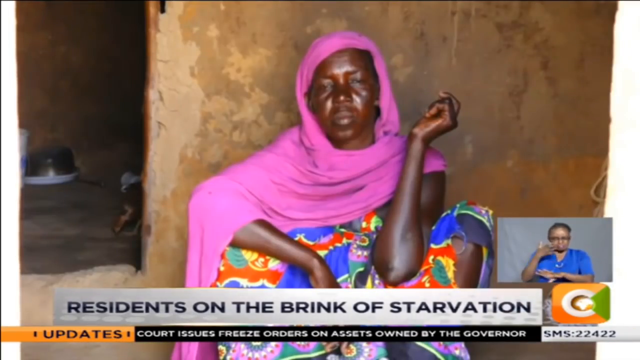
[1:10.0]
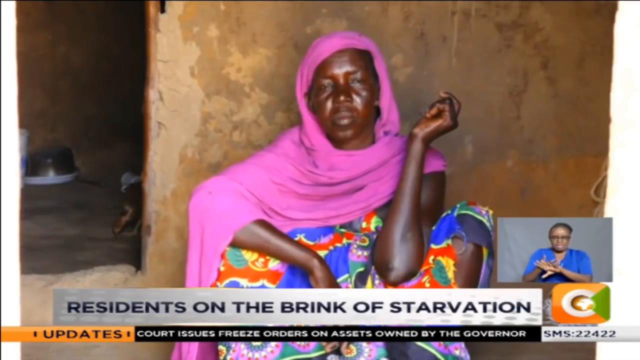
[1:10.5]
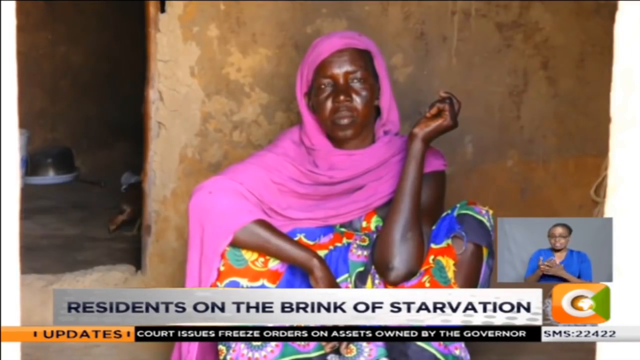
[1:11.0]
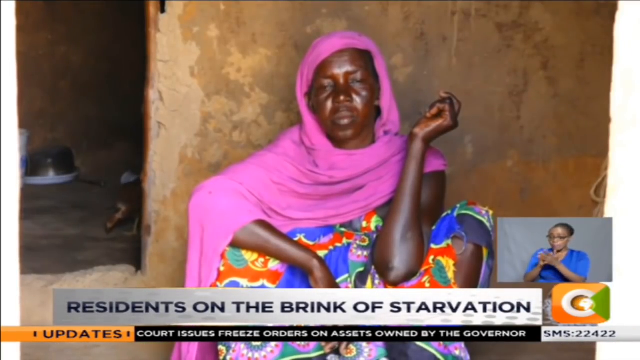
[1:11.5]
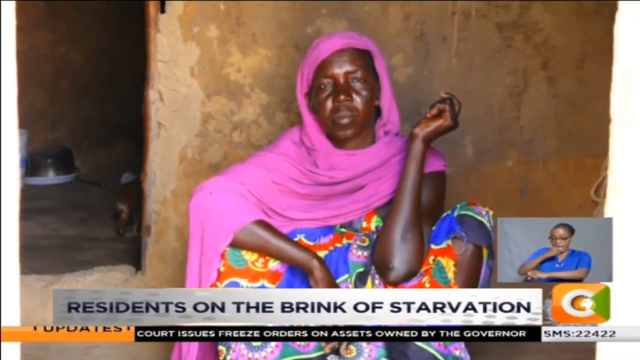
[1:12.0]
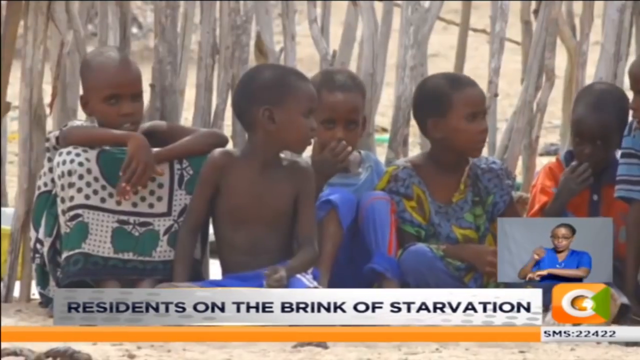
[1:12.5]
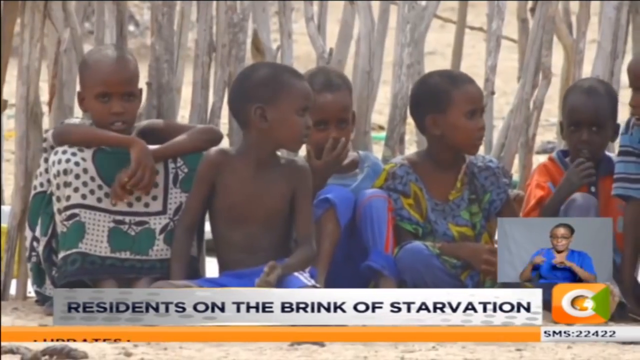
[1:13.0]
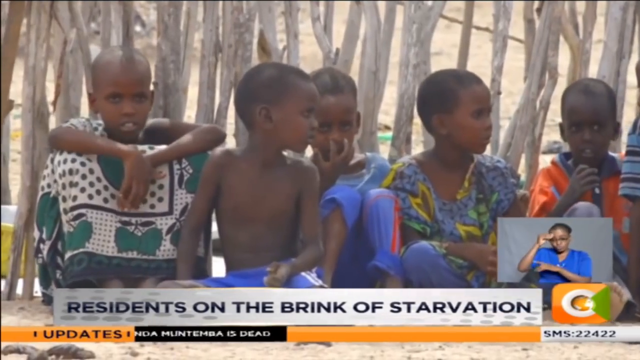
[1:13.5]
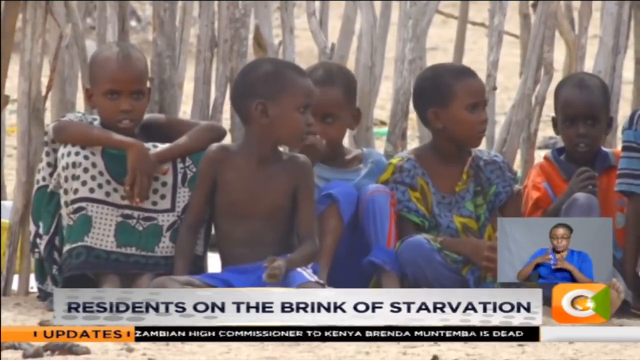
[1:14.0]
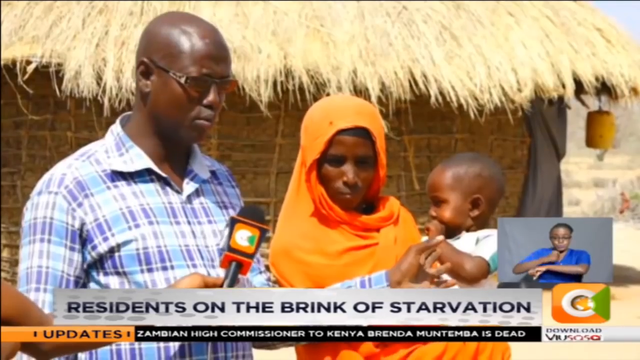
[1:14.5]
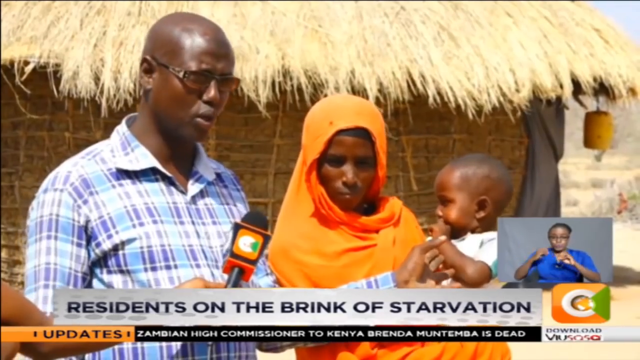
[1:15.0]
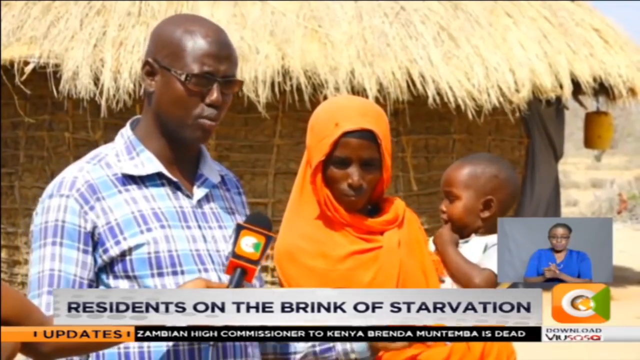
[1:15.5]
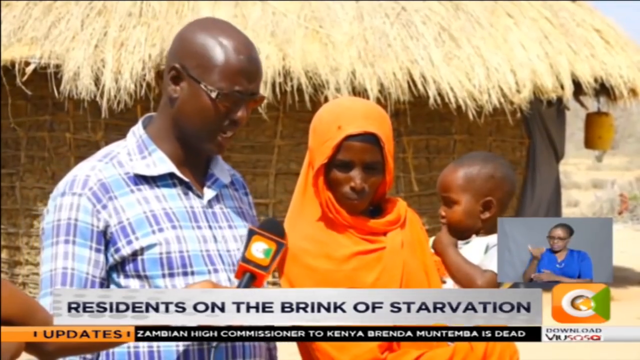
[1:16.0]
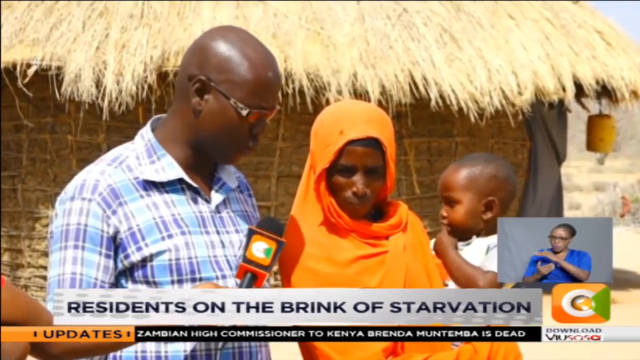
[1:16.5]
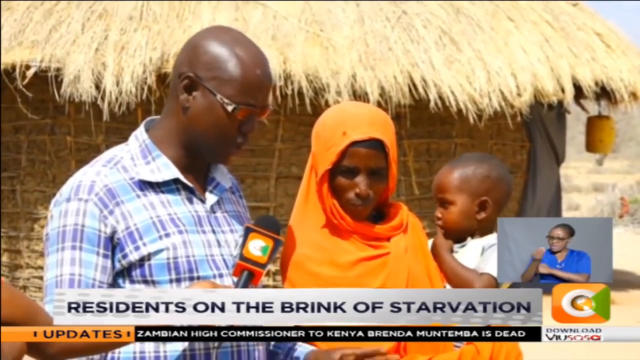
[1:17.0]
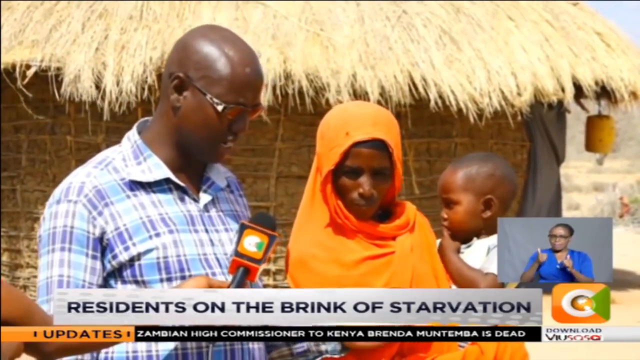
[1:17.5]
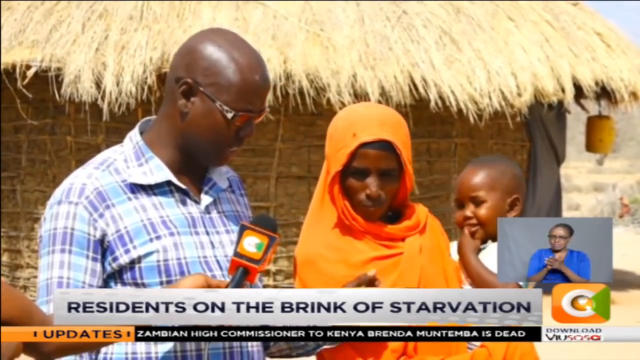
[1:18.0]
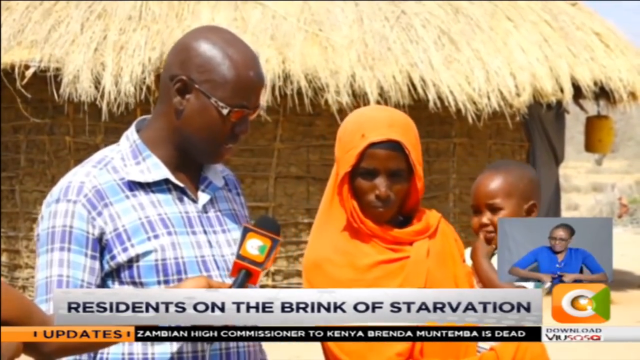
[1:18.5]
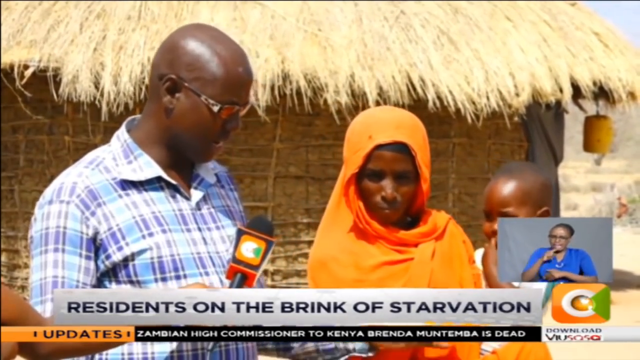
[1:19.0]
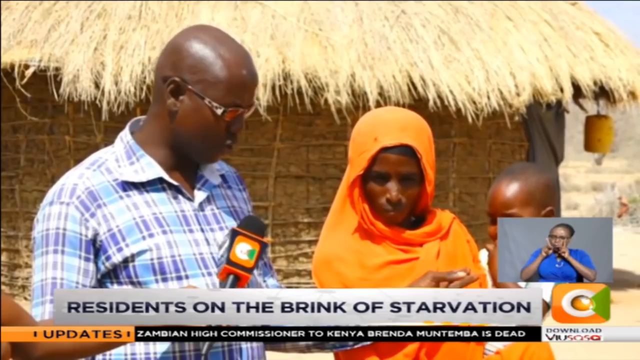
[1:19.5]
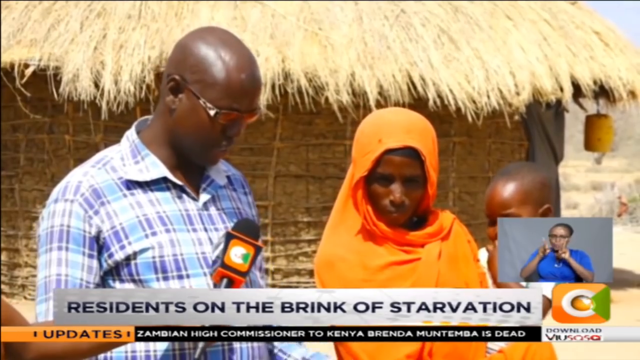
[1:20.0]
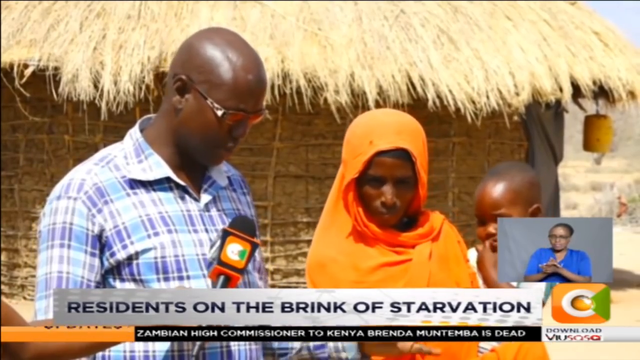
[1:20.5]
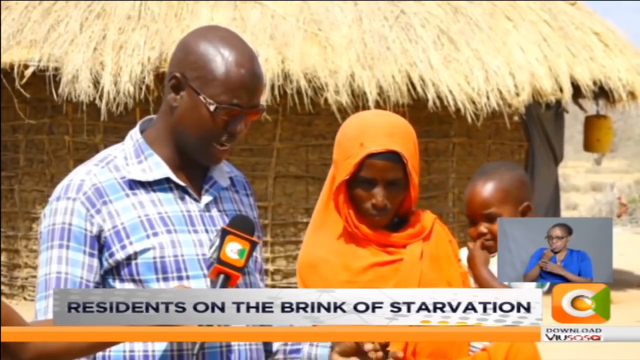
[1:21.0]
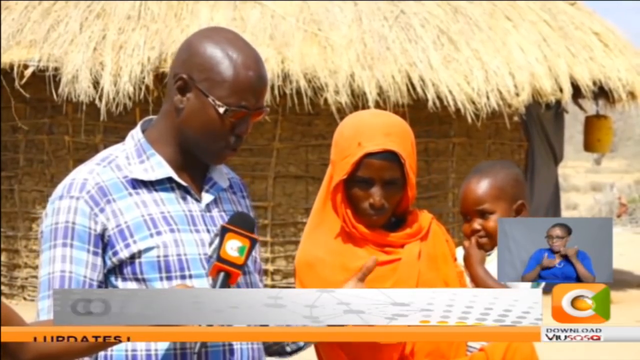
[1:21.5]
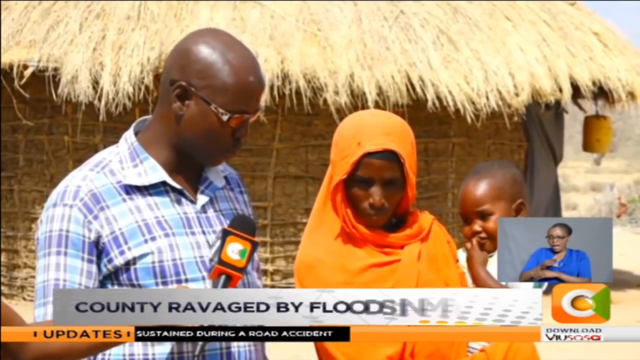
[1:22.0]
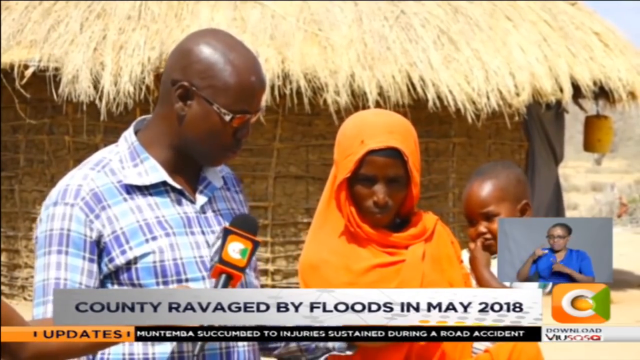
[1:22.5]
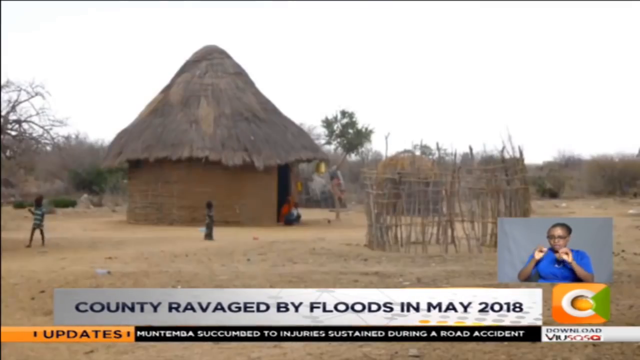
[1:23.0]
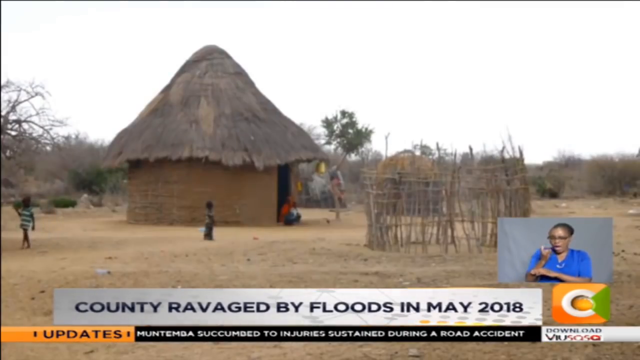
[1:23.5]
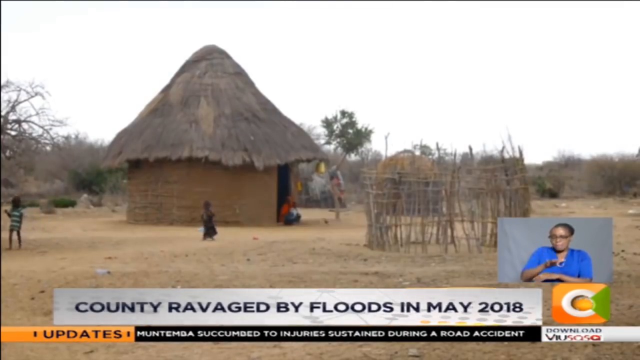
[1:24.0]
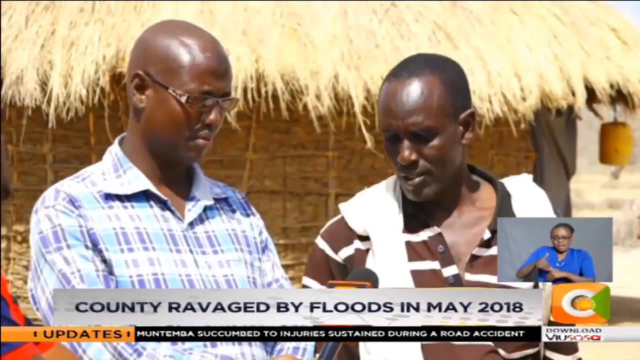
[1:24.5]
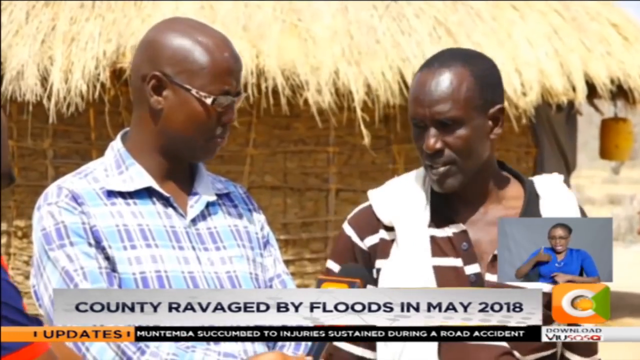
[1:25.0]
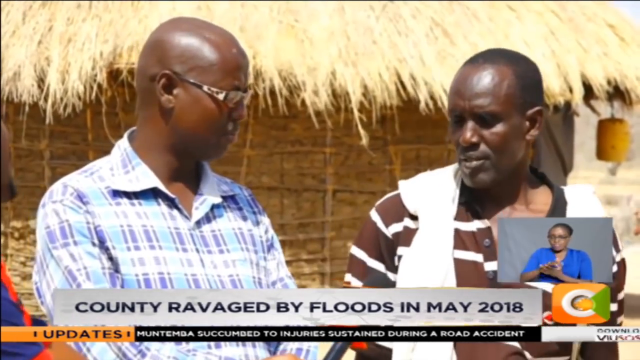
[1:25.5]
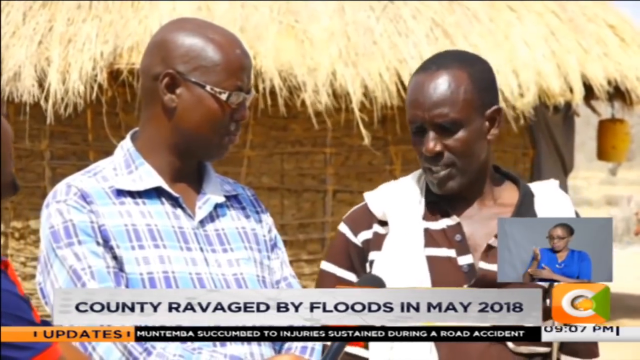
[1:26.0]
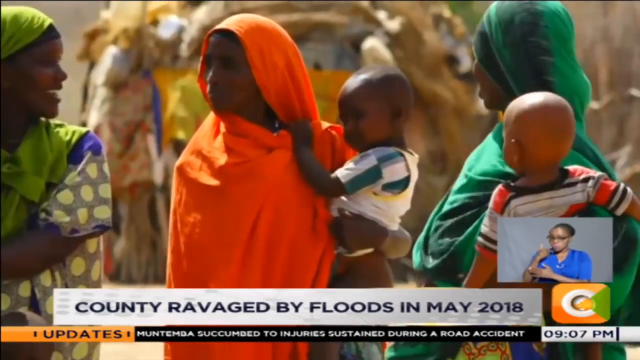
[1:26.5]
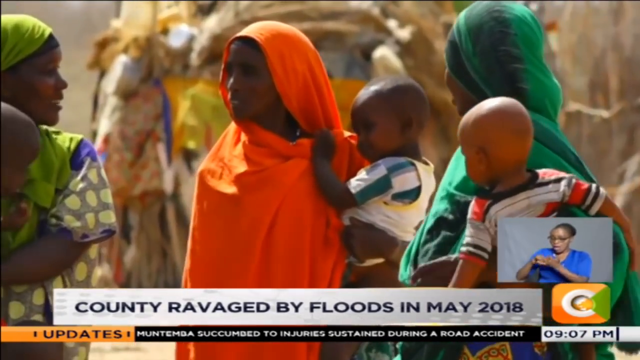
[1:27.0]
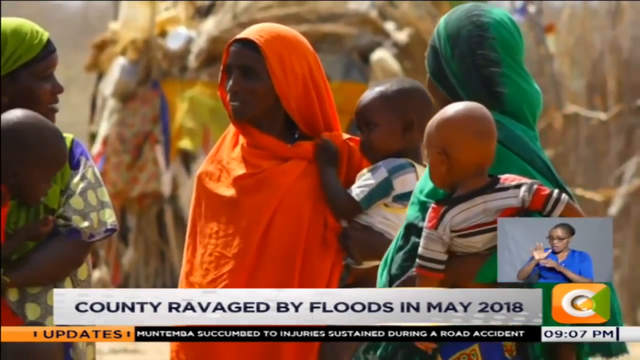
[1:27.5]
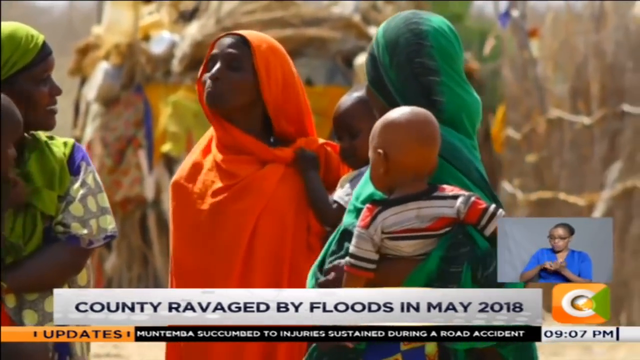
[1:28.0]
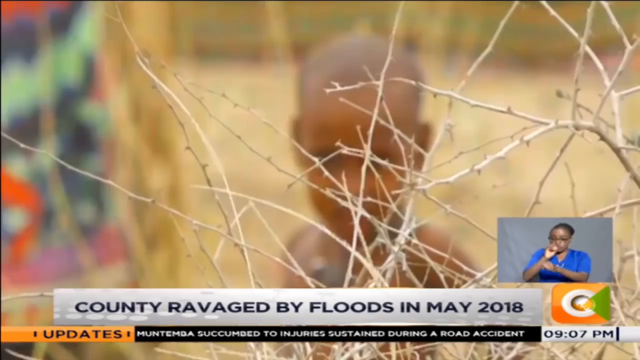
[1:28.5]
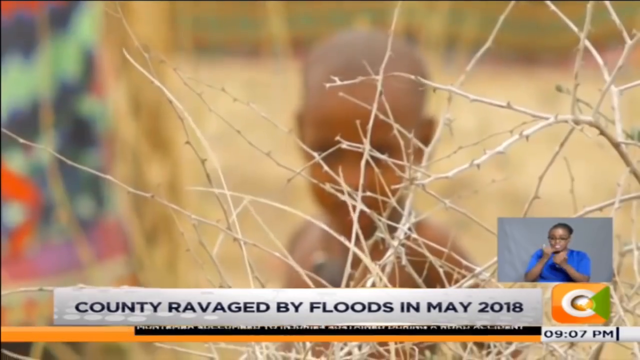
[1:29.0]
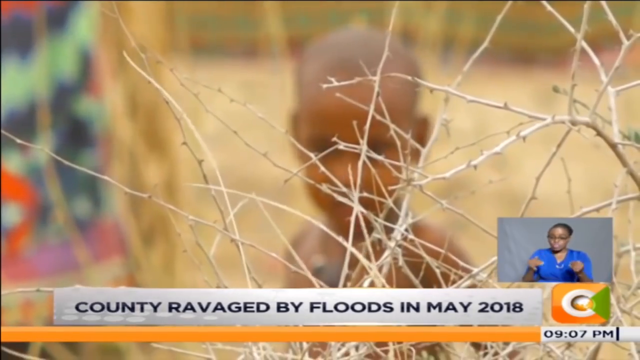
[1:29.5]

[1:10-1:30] A woman sits outside her house, looking very tired and hungry. She wears a pink shawl and a dress with blue, red, yellow and green designs. The sign language interpreter is still in the bottom right. The scene cuts to a group of four or five kids sitting together on the ground, seemingly waiting for food. Next, a man and his family are interviewed. The man wears a bluish plaid shirt, while his wife has an orange shawl over her head and holds a baby. They seem to be talking to the interviewer, possibly explaining the hardship of the drought. The camera pans to another group of people being interviewed right next to him. Then comes a scene of several mothers holding their babies, and it ends with a baby behind the bushes, looking through them.